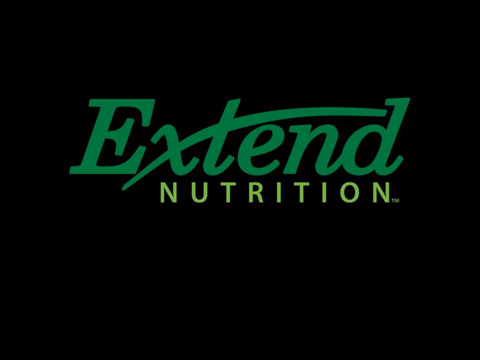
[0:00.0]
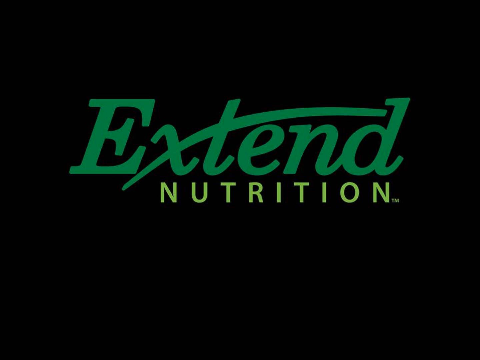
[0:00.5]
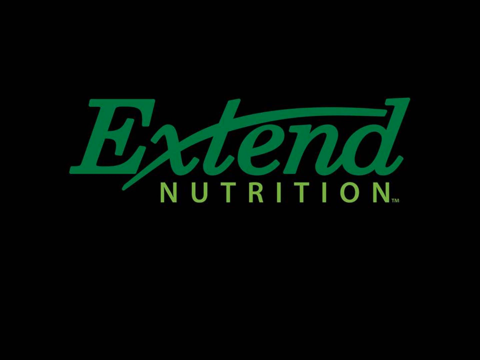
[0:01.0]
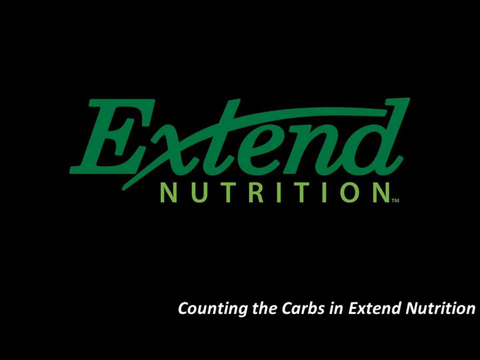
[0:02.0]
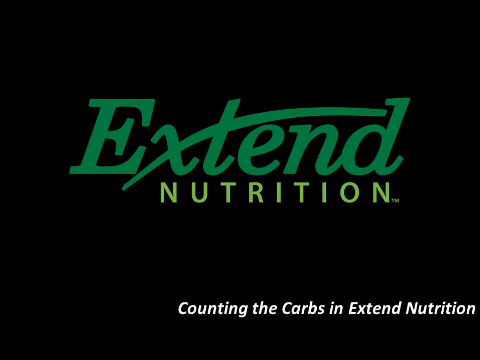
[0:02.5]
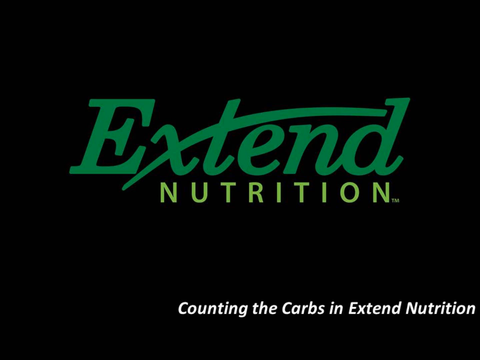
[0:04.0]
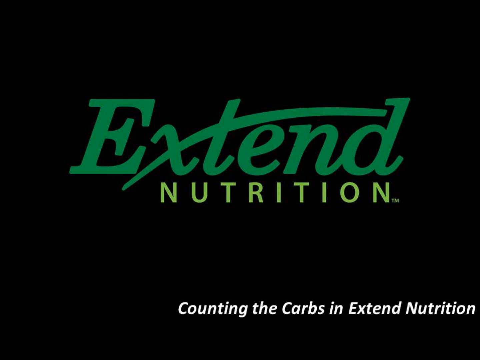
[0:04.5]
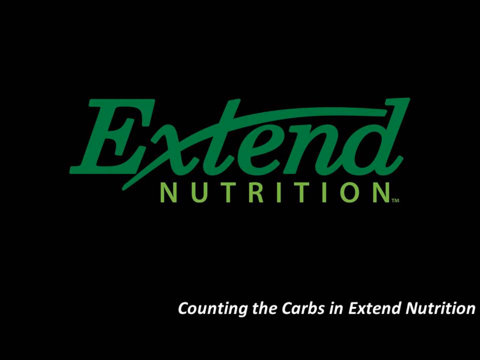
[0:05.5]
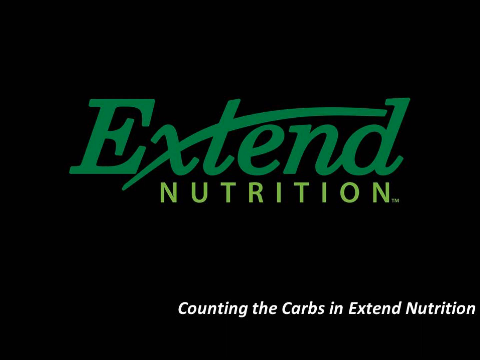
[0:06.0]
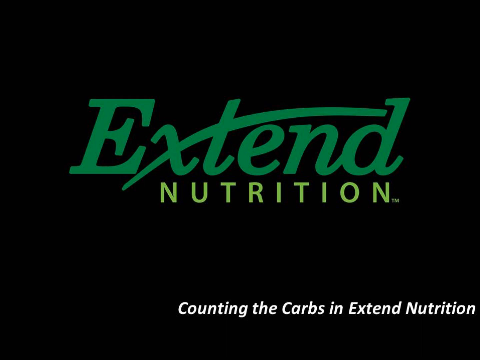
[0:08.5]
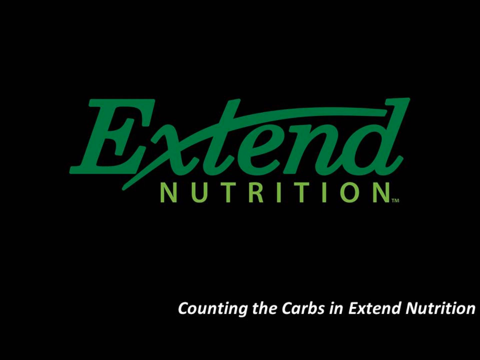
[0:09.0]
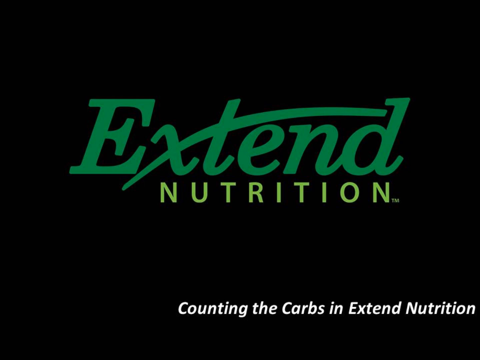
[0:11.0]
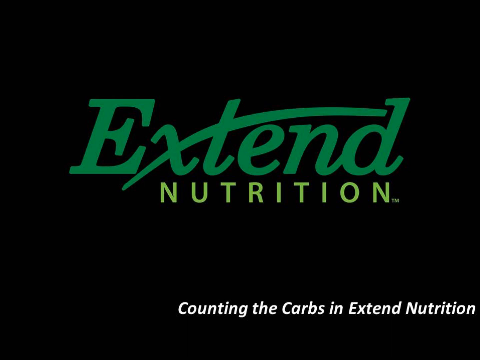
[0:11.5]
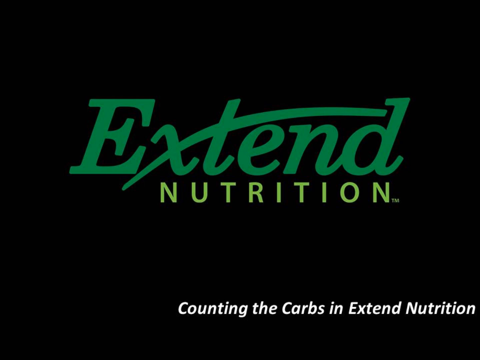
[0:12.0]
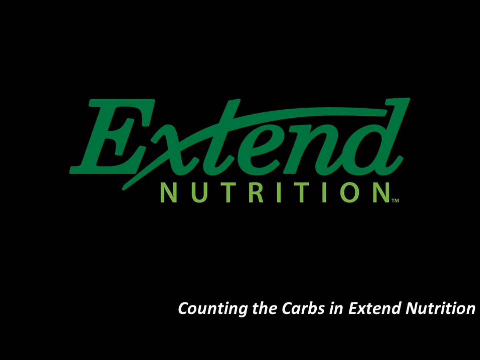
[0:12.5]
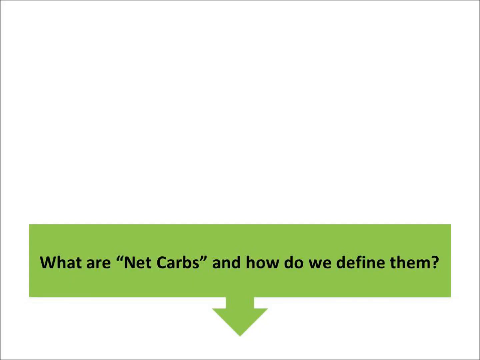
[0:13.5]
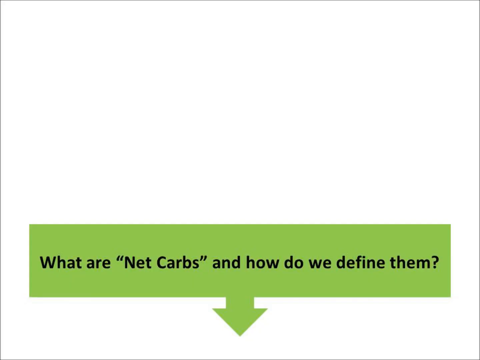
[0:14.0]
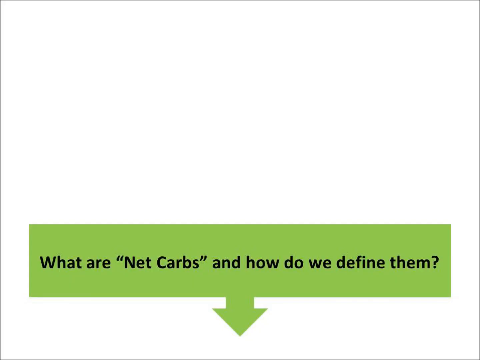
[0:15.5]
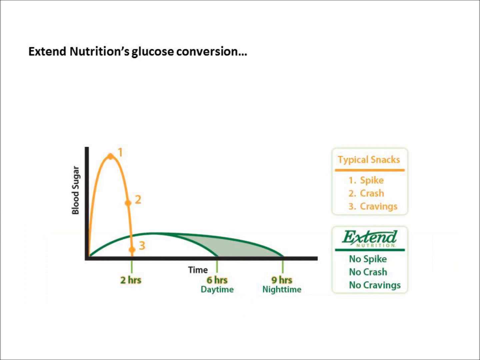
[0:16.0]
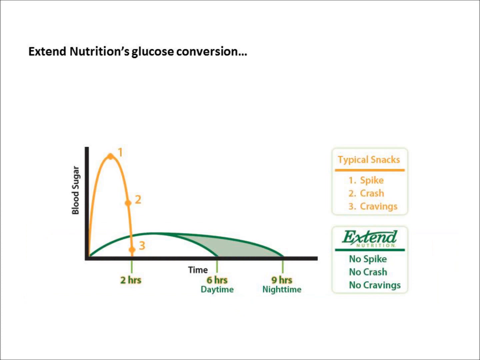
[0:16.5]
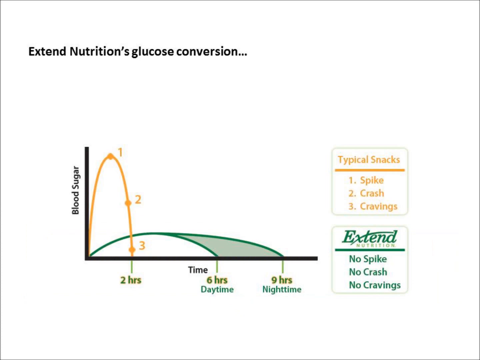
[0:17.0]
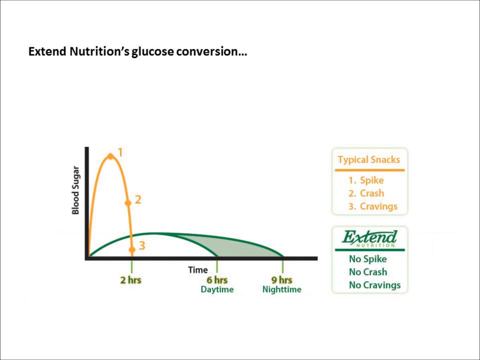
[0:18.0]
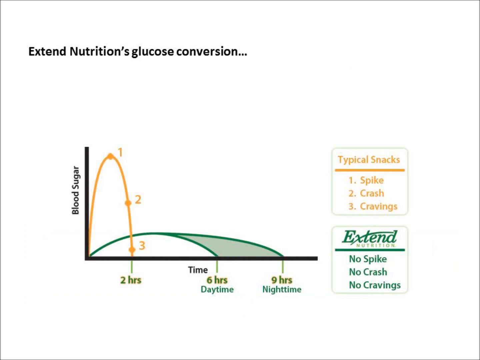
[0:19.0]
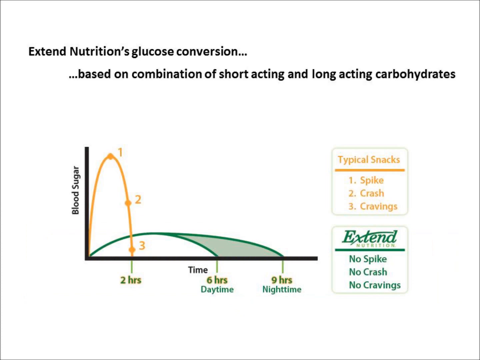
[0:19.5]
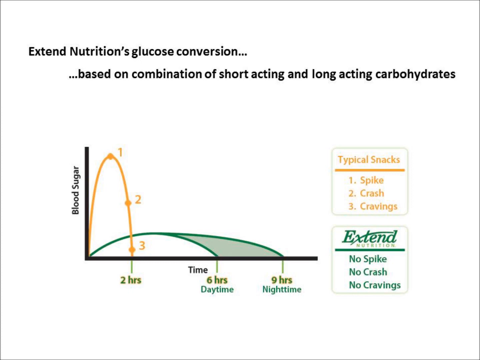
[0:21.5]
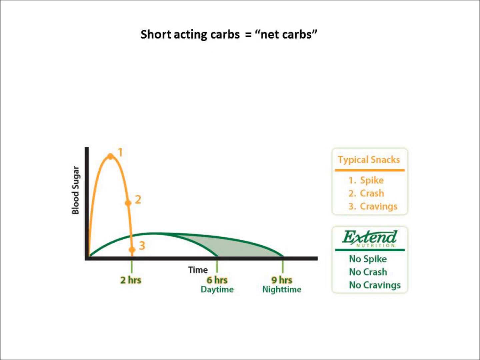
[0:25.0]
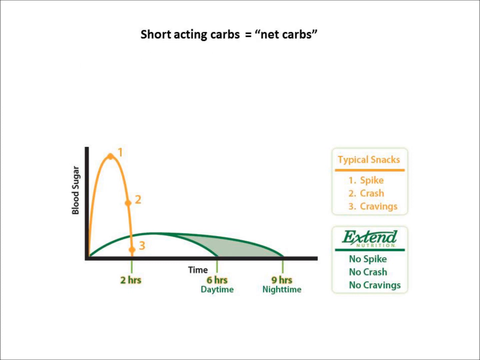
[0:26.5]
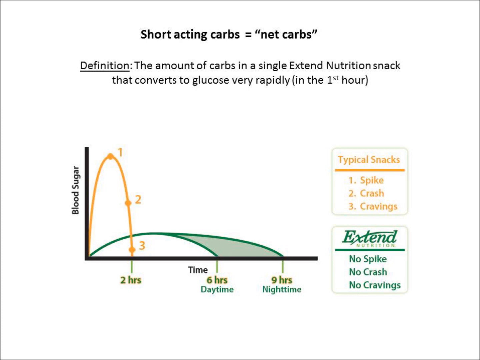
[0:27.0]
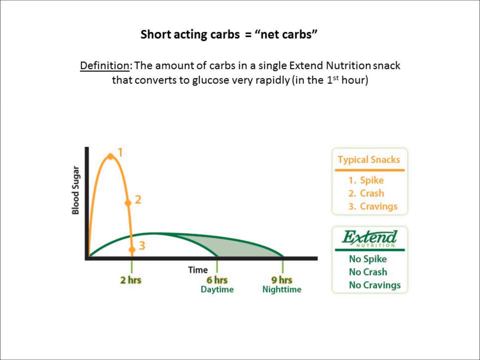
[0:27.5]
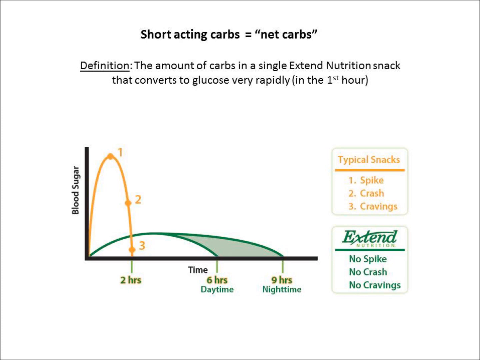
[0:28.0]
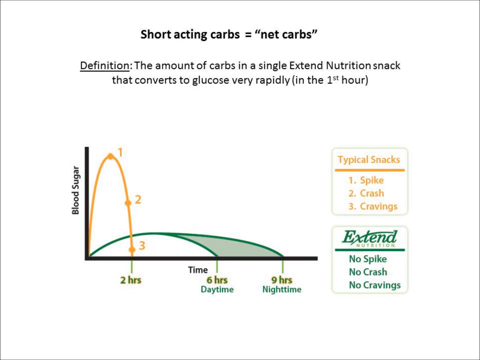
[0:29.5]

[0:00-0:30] The video opens on an Extend Nutrition logo with "counting the carbs." It moves to a screen asking "what are net carbs" and how they are defined. It then cuts to a graph headed "extend nutrition's glucose conversion": a line graph with blood sugar on the left axis and time along the bottom. Typical snacks are marked "spike, crash, cravings," while Extend is marked "no spike, no crash and no cravings." Text reads "Extended nutrition's glucose conversion is based on a combination of short-acting and long-acting carbohydrates." A definition follows: "the amount of carbs in a single Extended nutrition snack that converts to glucose very rapidly in the first hour."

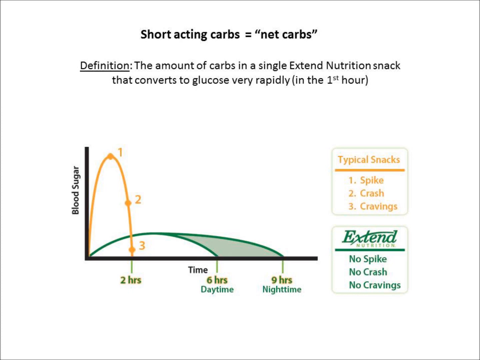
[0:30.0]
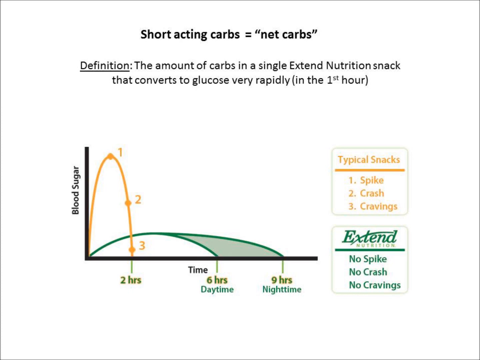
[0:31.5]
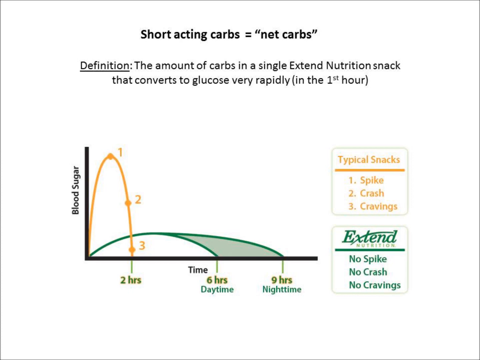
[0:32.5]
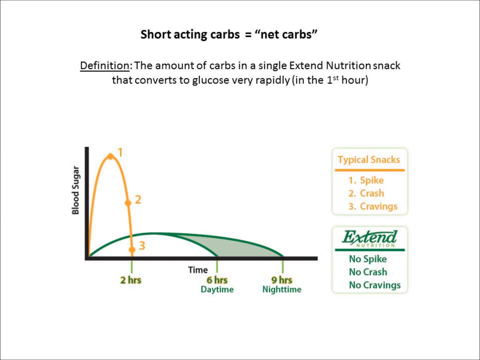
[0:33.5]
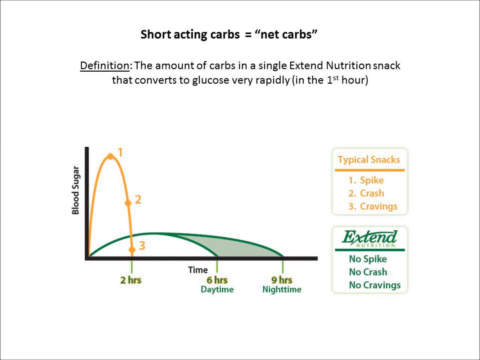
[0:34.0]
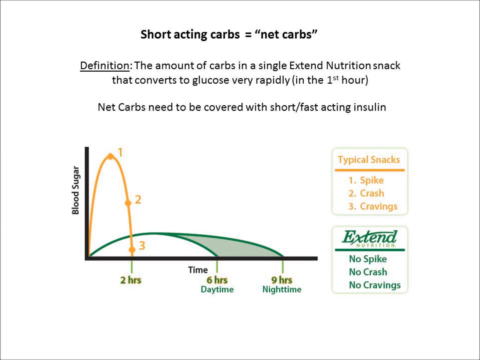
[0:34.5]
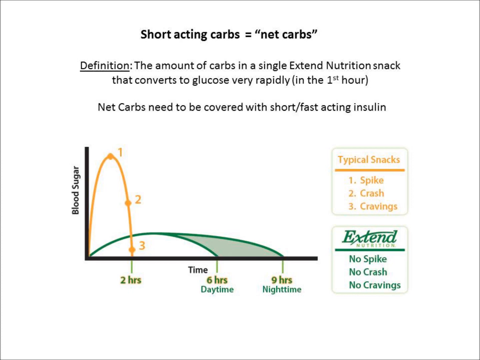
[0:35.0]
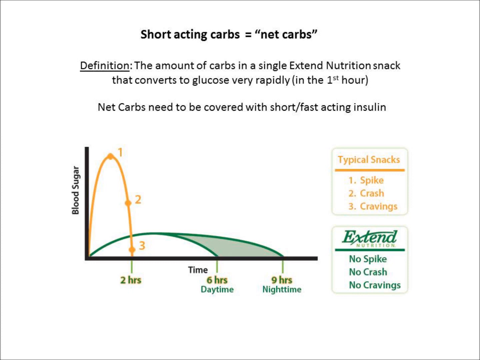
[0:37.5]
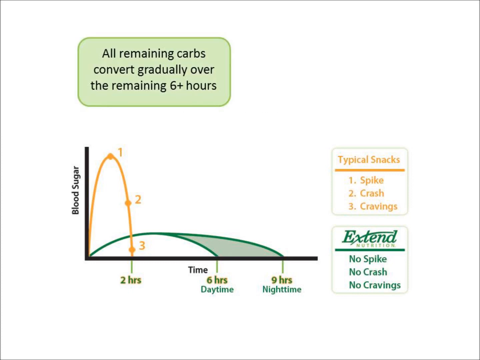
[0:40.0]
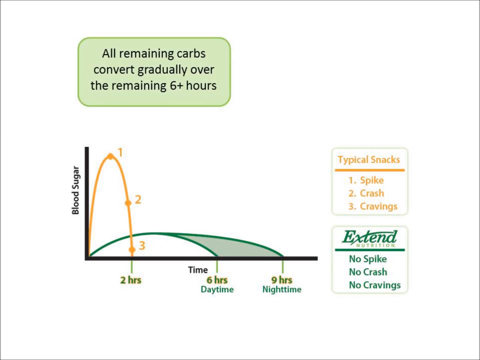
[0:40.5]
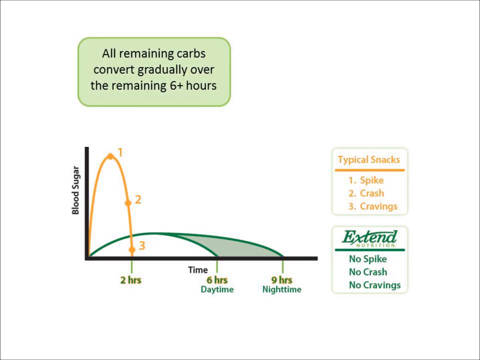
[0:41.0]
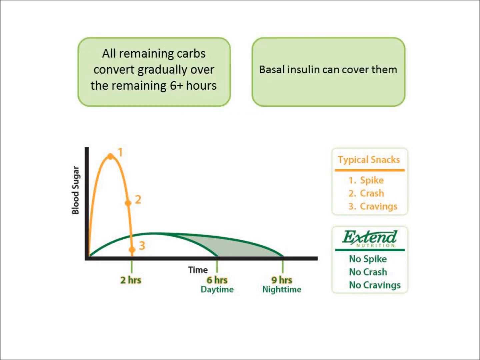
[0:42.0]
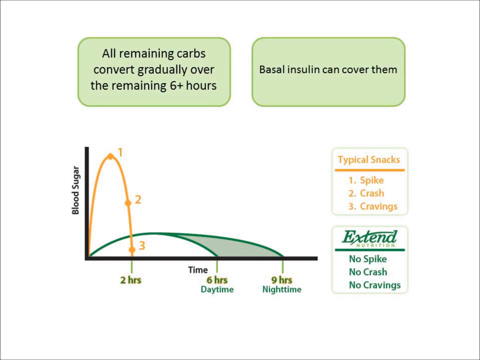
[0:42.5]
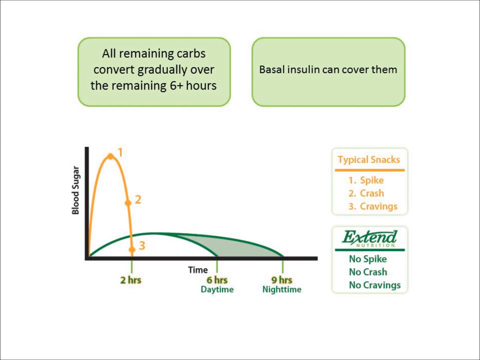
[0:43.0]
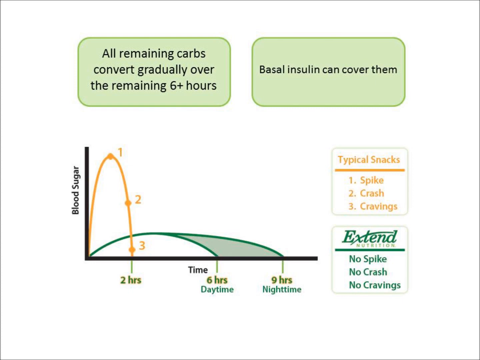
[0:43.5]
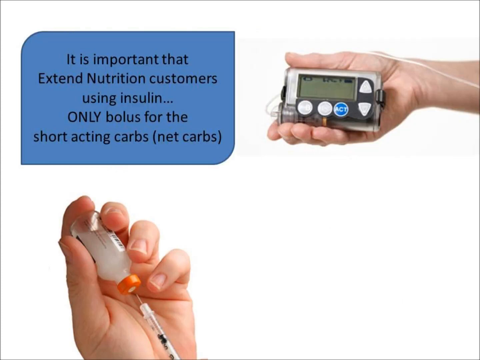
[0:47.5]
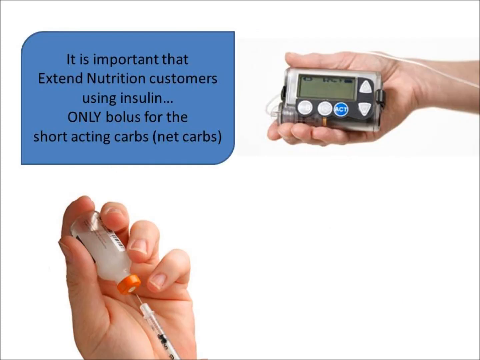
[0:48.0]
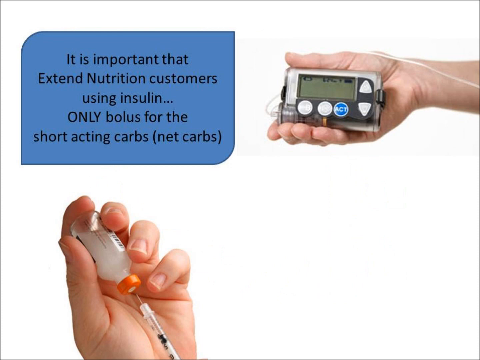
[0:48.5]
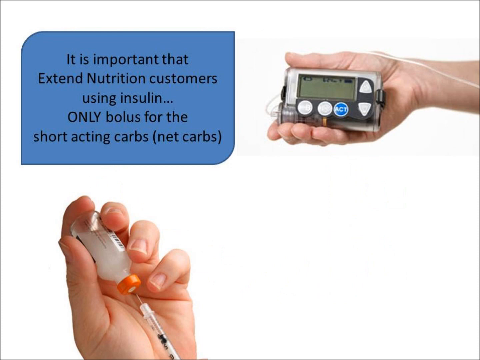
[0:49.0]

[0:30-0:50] The graph screen remains up. Text soon appears stating that net carbs need to be converted with fast-acting insulin. Another note pops up: "all remaining carbs convert gradually over the remaining six plus hours," followed by "basal insulin can cover them." The graph stays the same the whole time until the screen changes altogether. A completely new screen then shows a hand holding what looks like an insulin monitor or blood sugar monitor, and somebody with an injection of some sort. The text says it is important that Extend Nutrition customers using insulin only bolus for the short-acting carbs, with "net carbs" in parentheses.